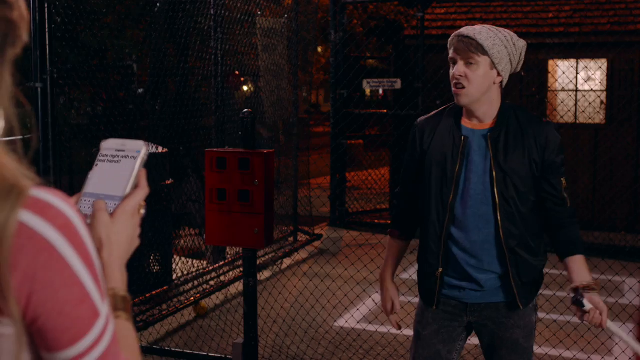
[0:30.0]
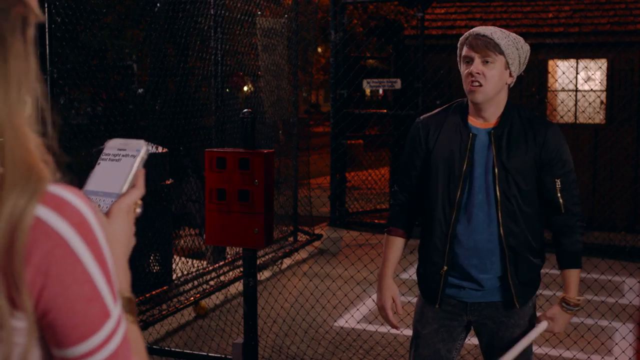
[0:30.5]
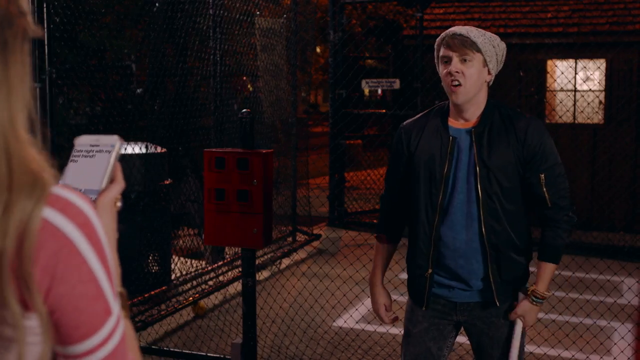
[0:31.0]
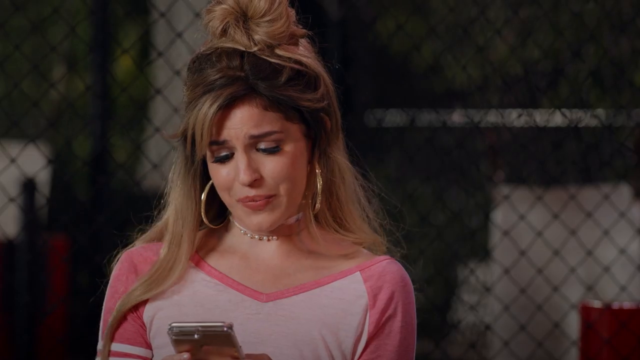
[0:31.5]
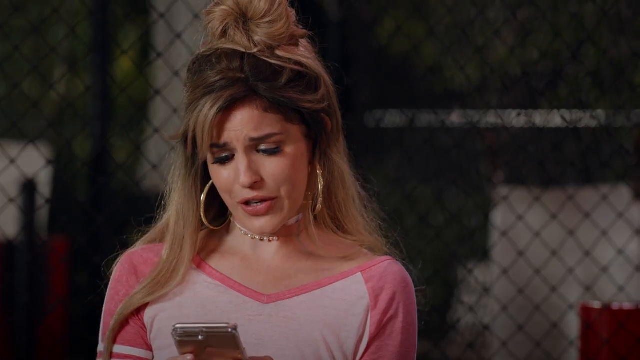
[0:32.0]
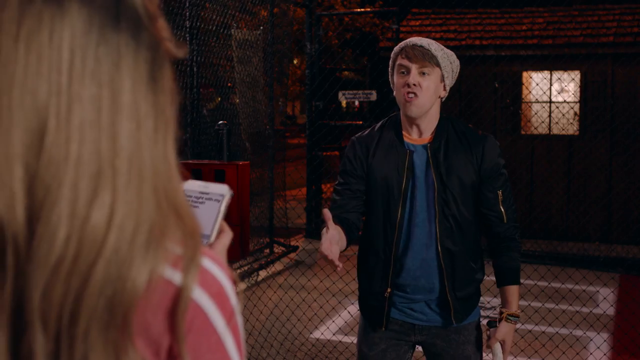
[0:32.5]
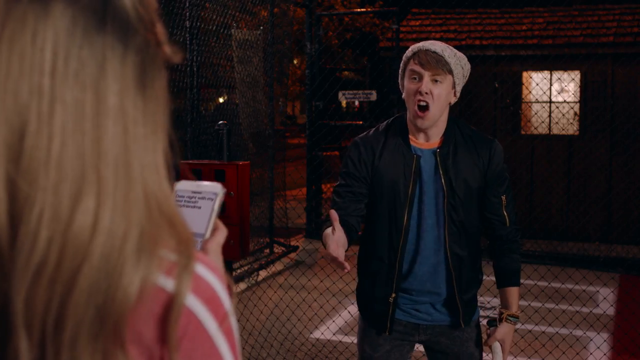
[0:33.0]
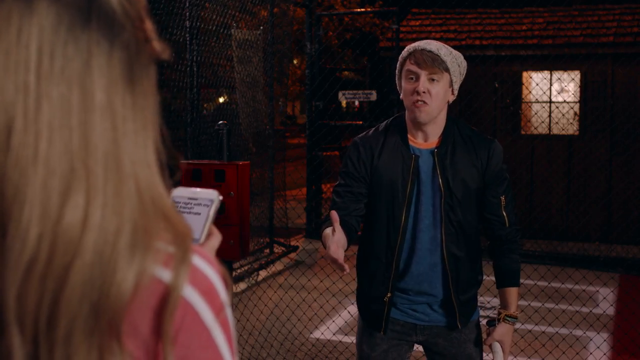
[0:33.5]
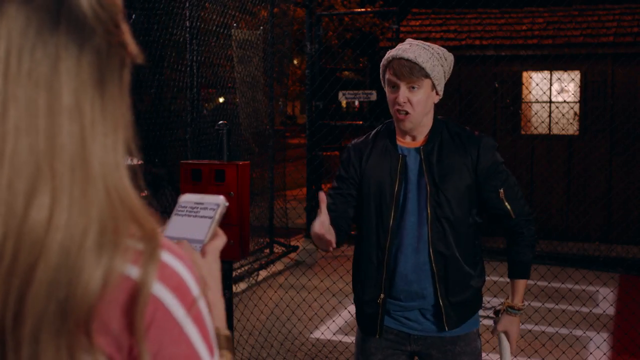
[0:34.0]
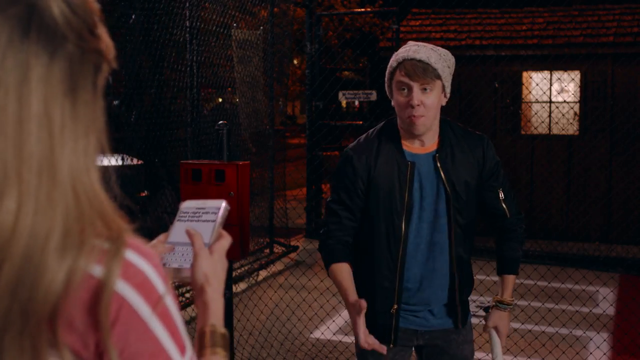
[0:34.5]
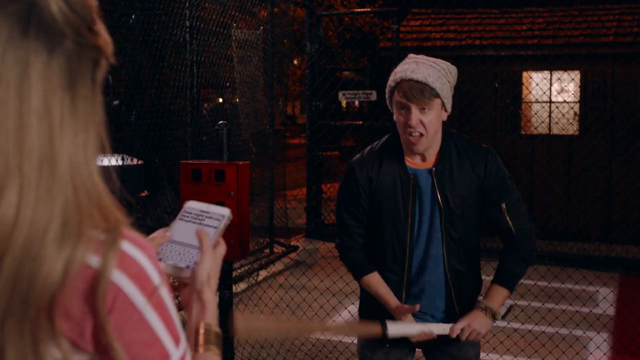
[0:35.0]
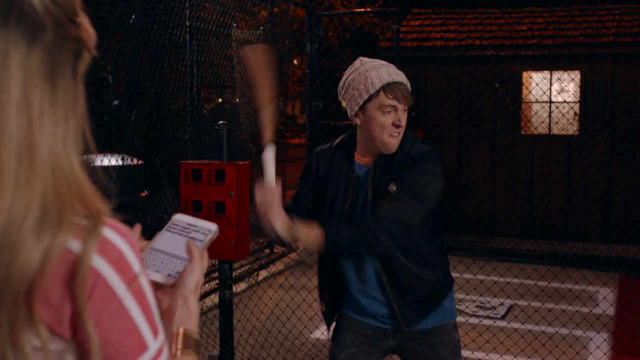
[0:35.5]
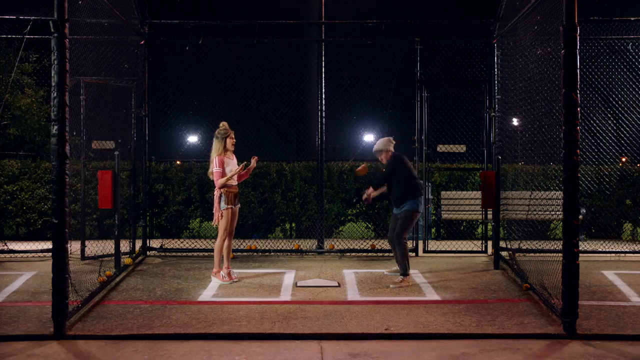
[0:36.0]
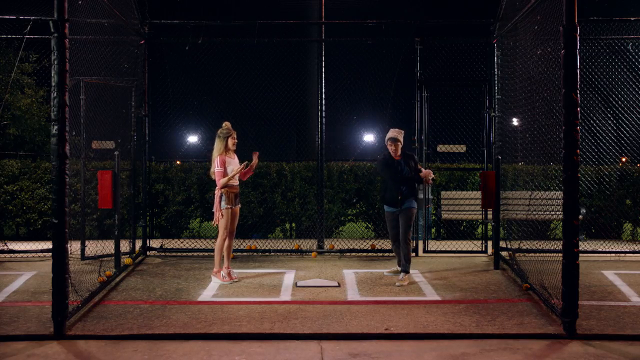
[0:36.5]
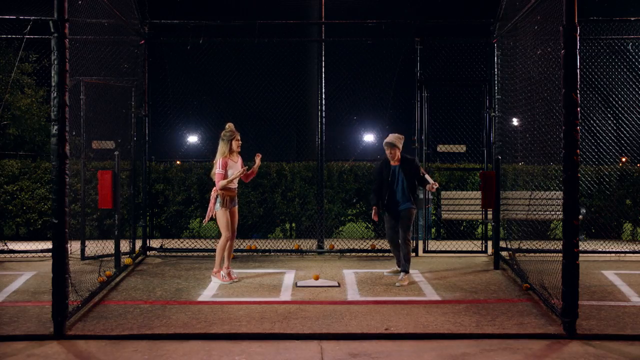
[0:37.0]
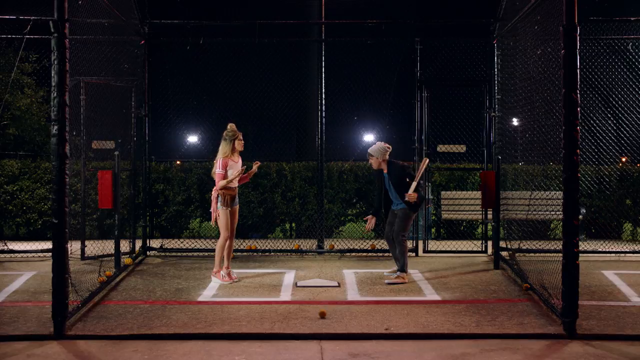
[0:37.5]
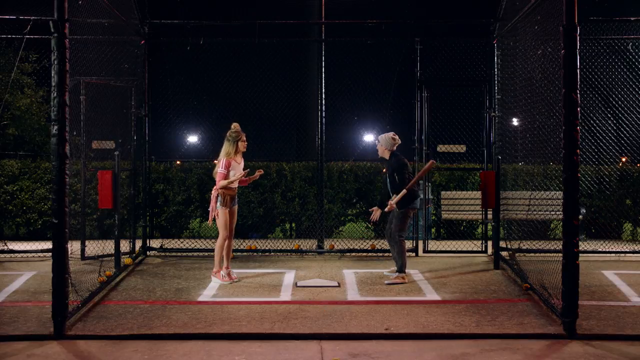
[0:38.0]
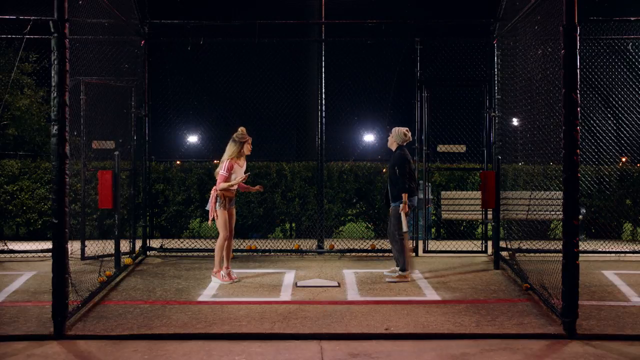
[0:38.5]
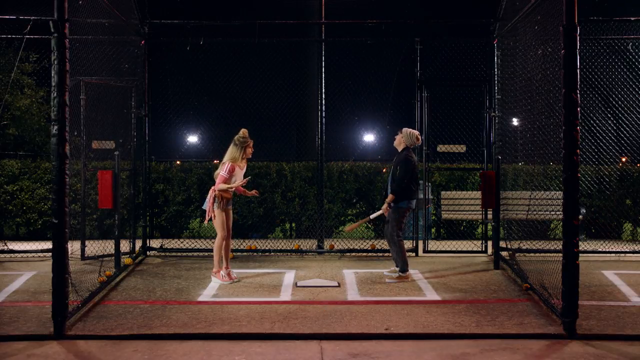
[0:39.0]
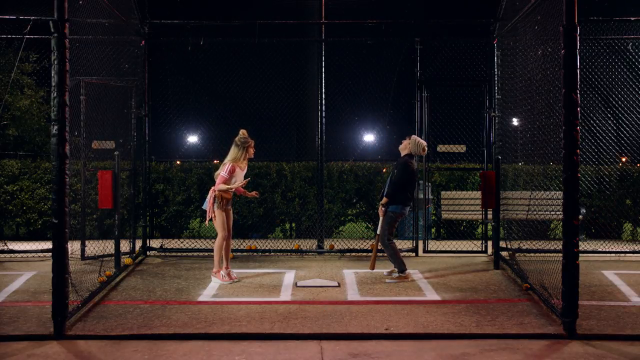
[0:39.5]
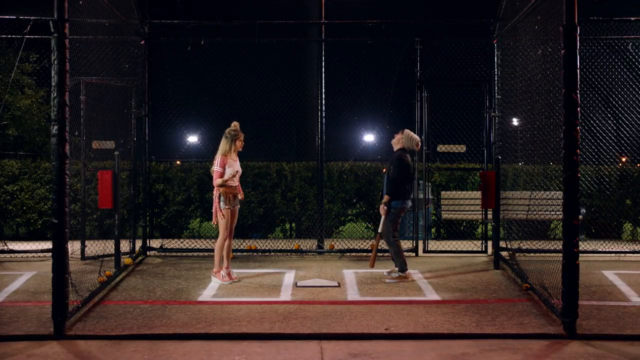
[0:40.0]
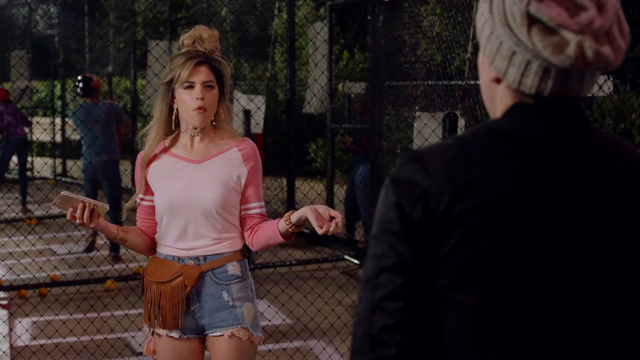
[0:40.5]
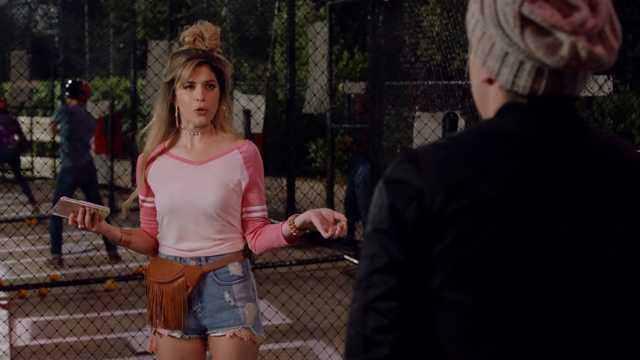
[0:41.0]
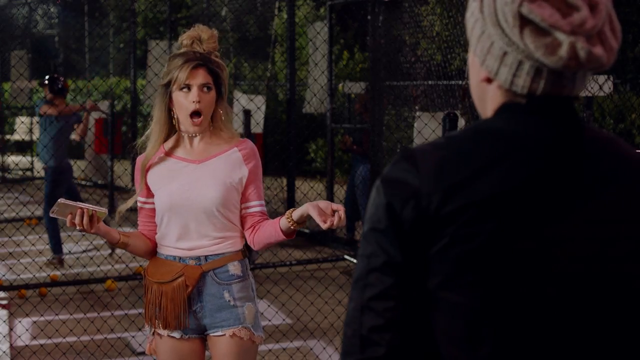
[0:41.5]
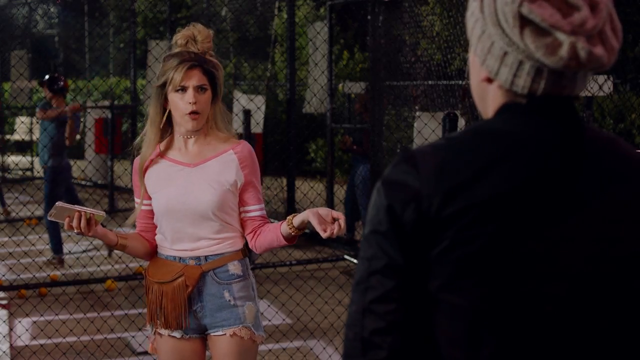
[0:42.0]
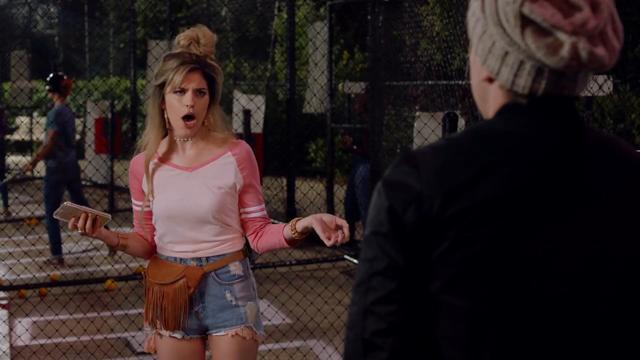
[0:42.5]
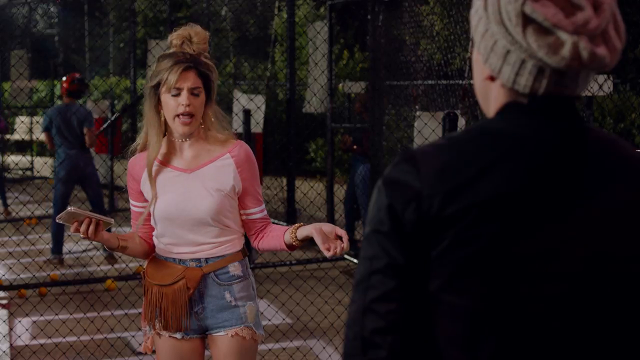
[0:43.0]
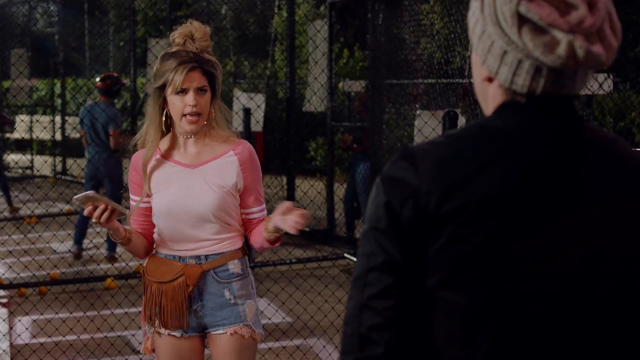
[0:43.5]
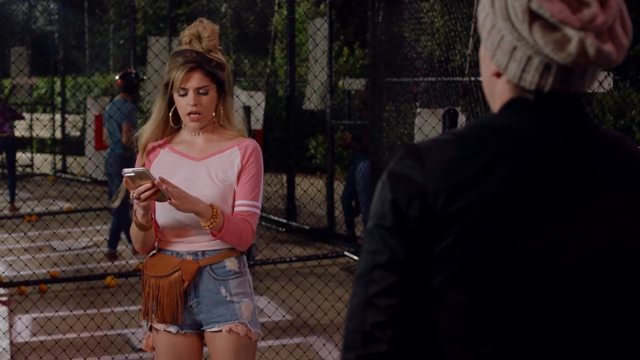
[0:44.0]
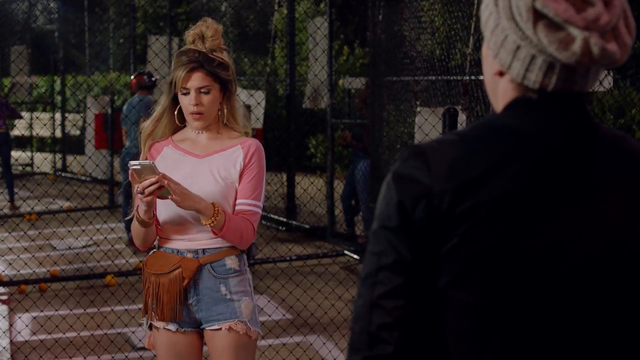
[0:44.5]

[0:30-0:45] A man and a woman are in a batting cage at night. The woman wears a v-neck sporty baseball-type shirt with stripes on the sides and cut-off shorts, and has long blondish hair, big hoop earrings and a necklace. She looks at her phone and types something. The camera cuts to the man, who is saying something and is upset, talking or replying to her. The pitching machine pitches him a ball, and he swings and misses. The woman is sort of scolding him or telling him off and is kind of snooty, and the man is very upset; perhaps she is distracting him. He swings at another pitch and misses again, seeming upset, while the woman is sort of mocking him. The batting cage is outdoors, with a line of hedges, some flood lamps and a park bench behind them, and it is night.